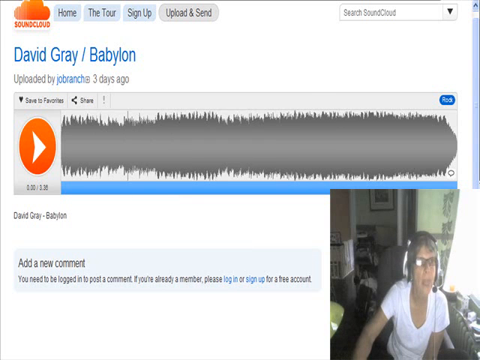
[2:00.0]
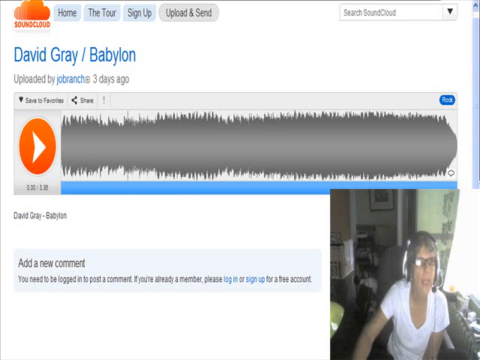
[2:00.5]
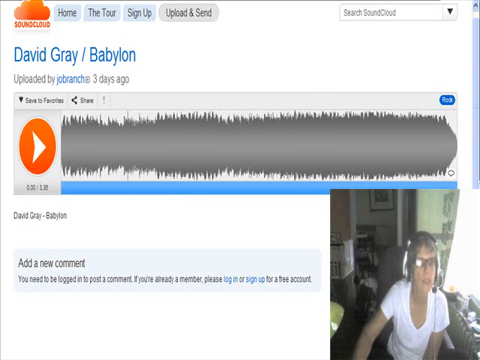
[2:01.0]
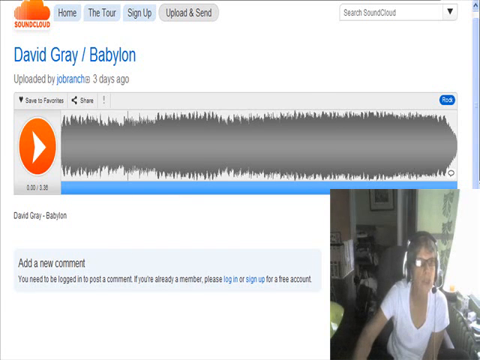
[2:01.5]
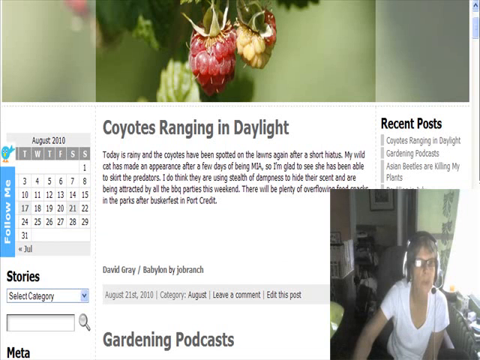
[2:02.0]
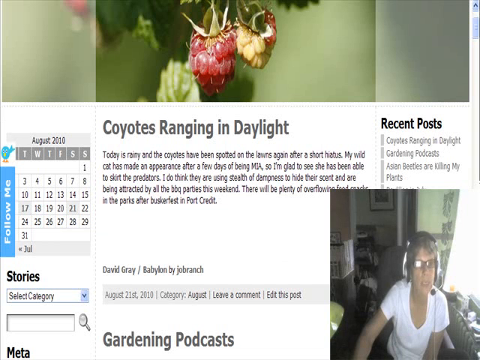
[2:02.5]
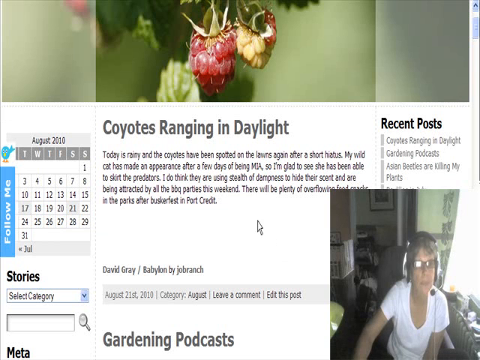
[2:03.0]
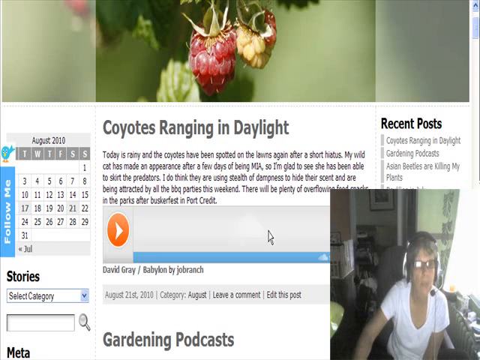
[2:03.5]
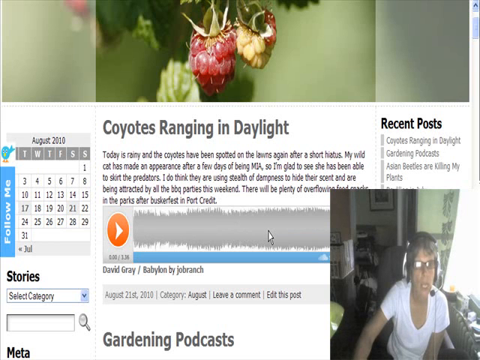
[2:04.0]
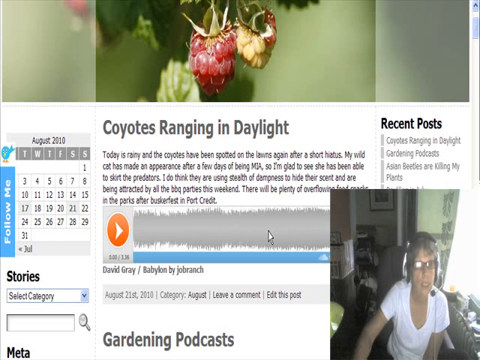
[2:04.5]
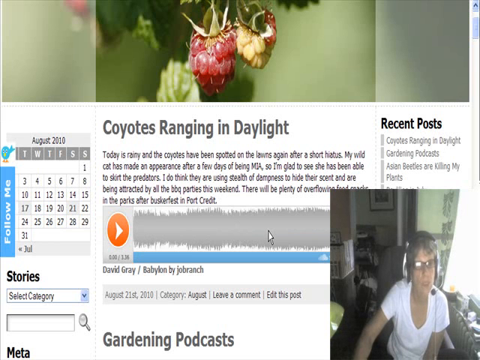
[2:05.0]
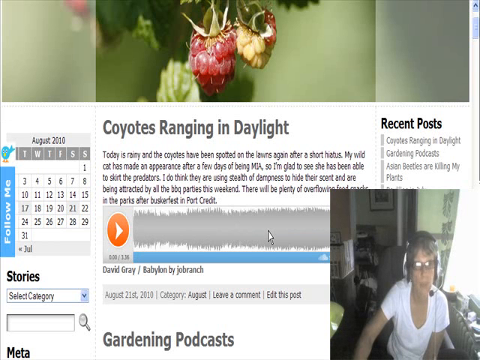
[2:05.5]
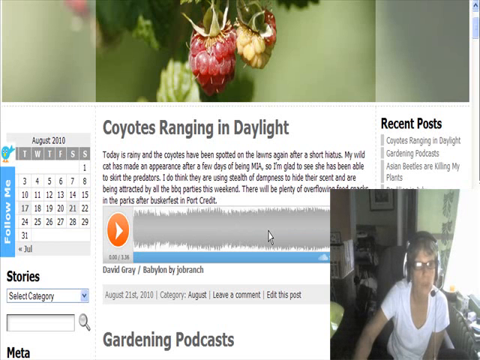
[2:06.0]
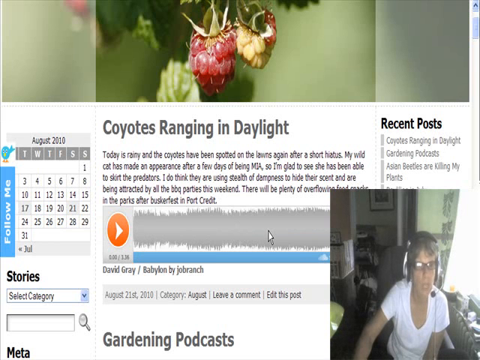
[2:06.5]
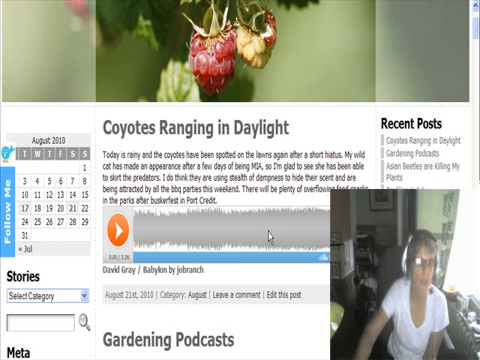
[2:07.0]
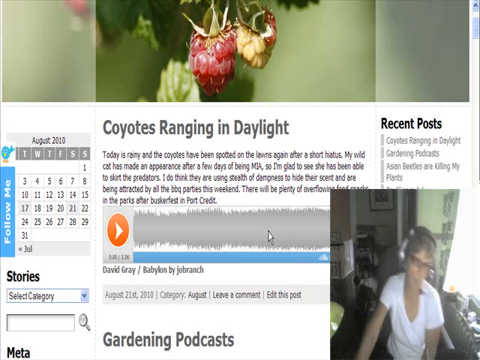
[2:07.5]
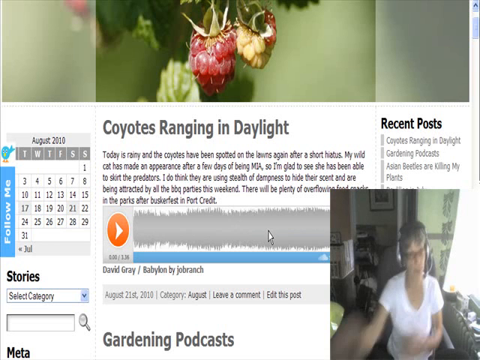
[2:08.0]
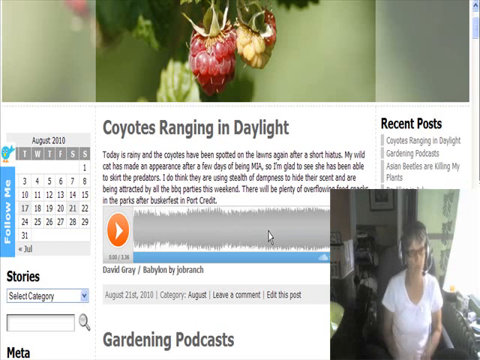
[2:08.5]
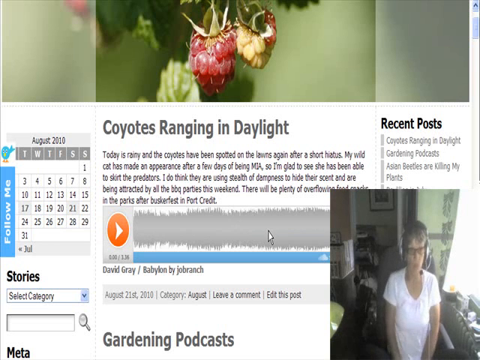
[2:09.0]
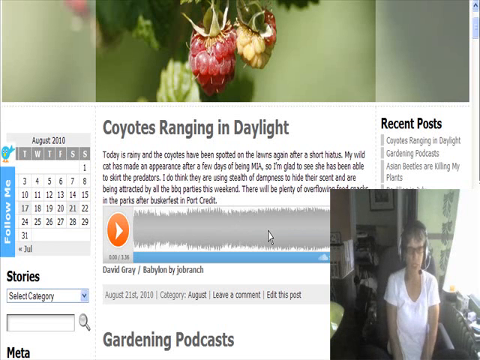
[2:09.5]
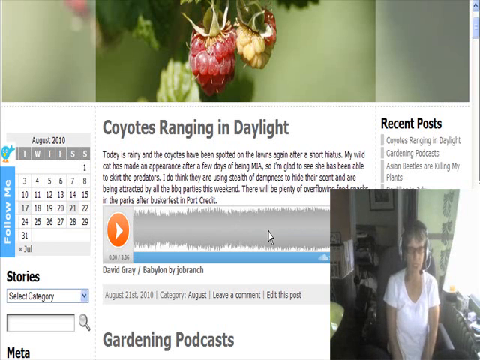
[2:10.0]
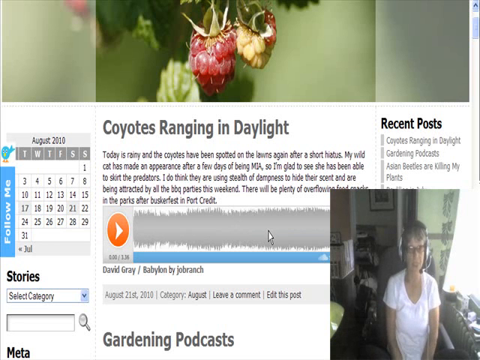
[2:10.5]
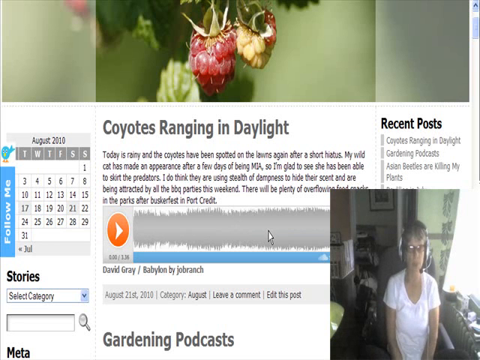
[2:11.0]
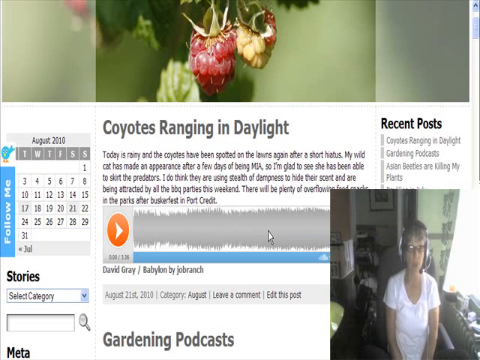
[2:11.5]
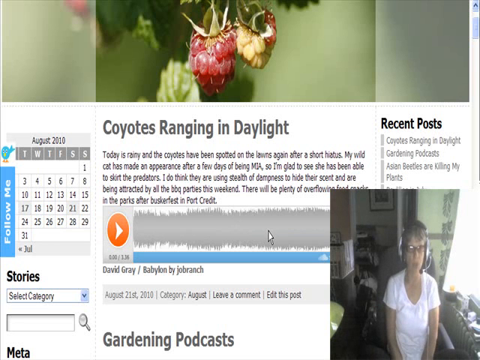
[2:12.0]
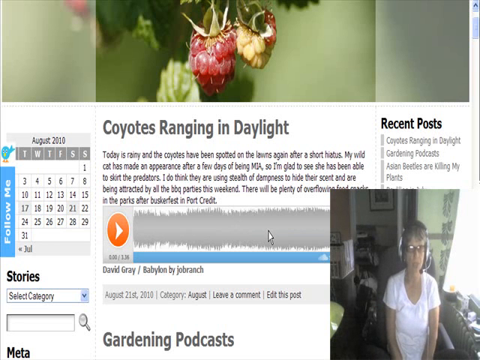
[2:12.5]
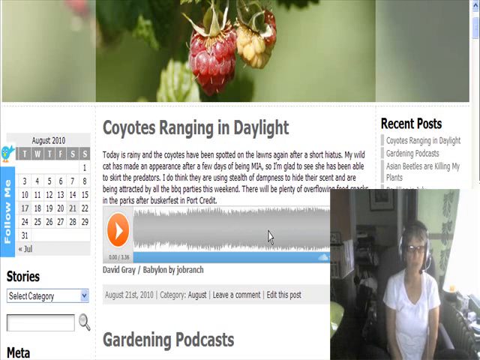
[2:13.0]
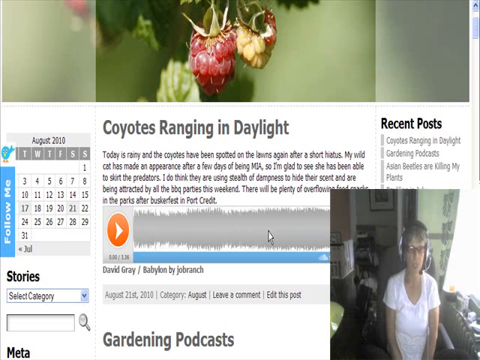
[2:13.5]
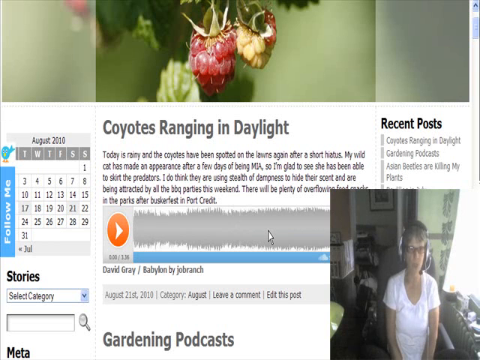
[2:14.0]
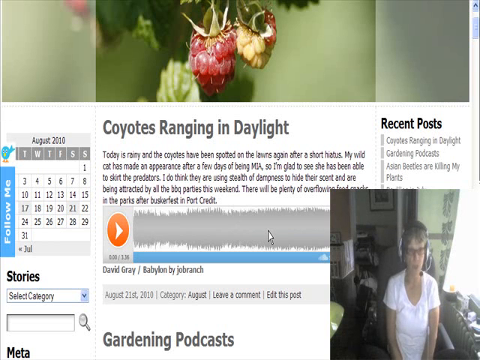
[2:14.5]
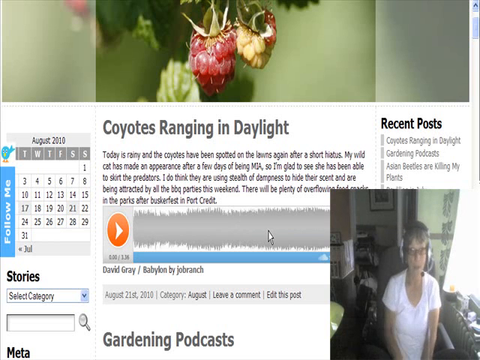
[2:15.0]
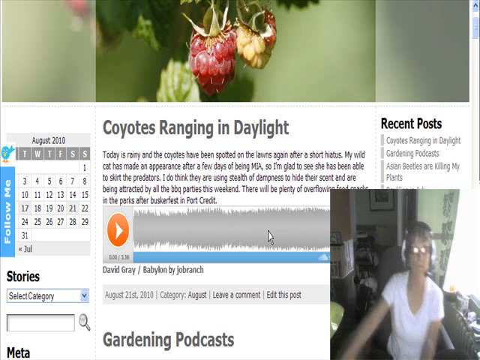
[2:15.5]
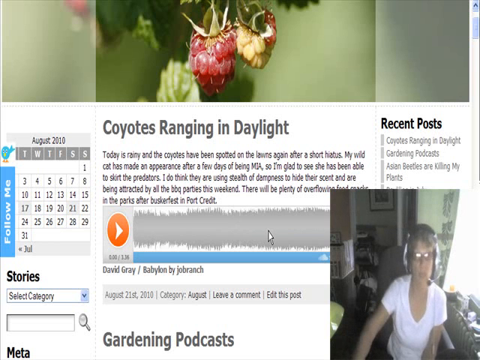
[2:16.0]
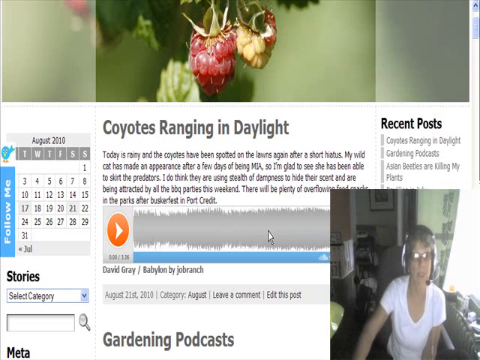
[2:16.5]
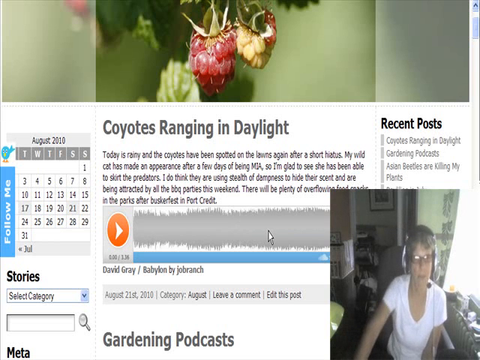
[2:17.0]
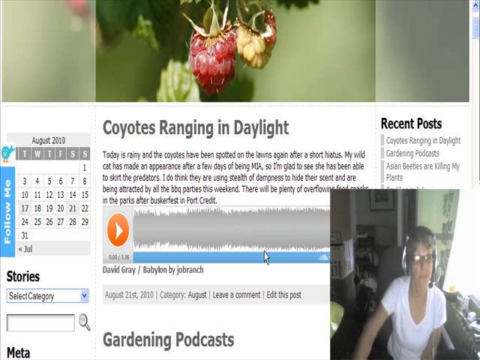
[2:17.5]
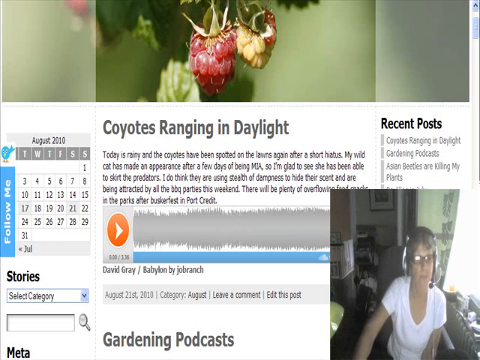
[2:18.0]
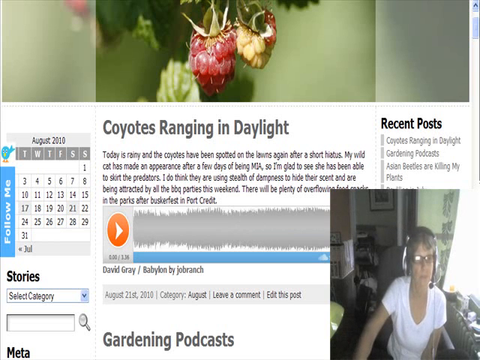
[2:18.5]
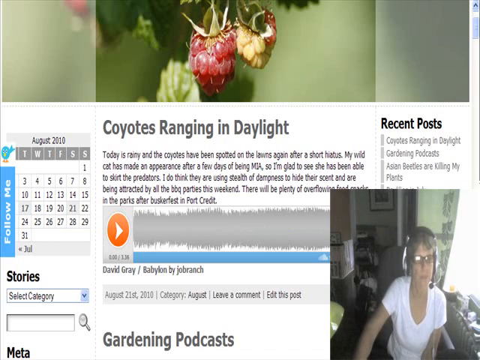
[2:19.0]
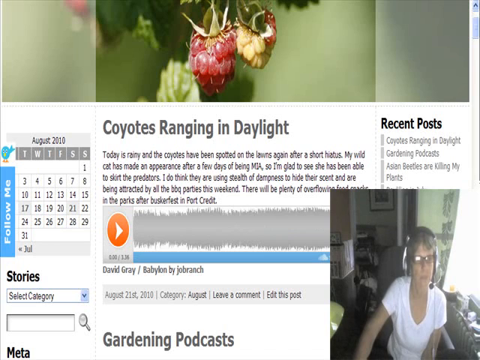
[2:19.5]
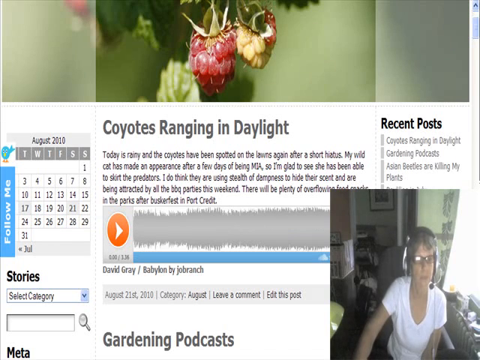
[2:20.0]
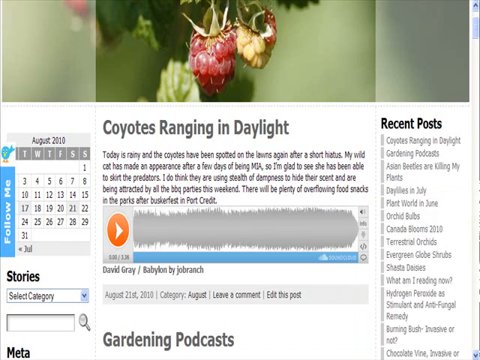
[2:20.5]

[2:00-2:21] The page changes from the SoundCloud page back to the "coyotes ranging in daylight" page, with the small window containing the sound bar, and her mouse hovers there. Meanwhile the woman raises her right shoulder, tilts her head down to the left, lifts her head back up, and leans back with her shoulders squared and both arms at her sides instead of one on the table with the mouse. She then brings her right arm back up and places it on the table, presumably over the mouse; only mid-forearm upward is visible, as she is cut off at the waist. Her expression doesn't change much as she keeps talking. The screen returns to the initial "coyotes ranging in daylight" page, ending where the page was earlier in this segment.